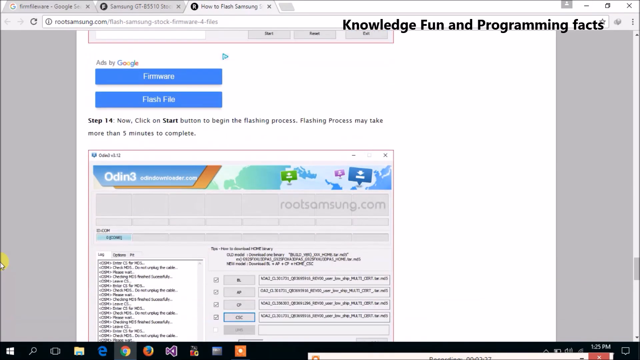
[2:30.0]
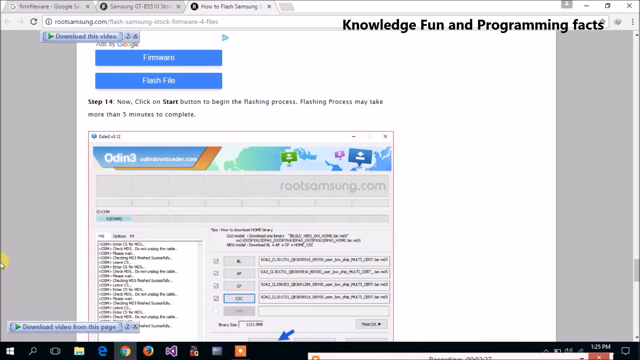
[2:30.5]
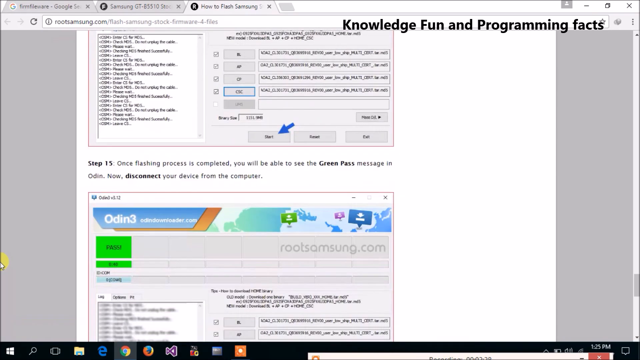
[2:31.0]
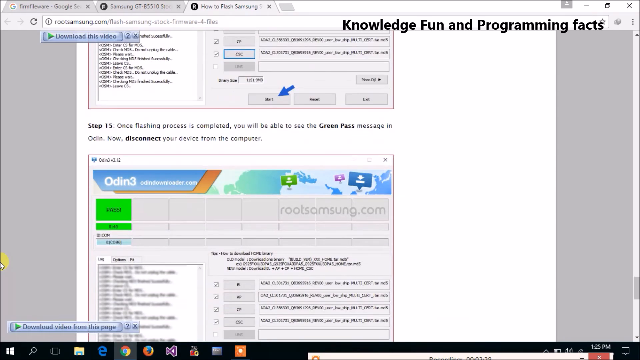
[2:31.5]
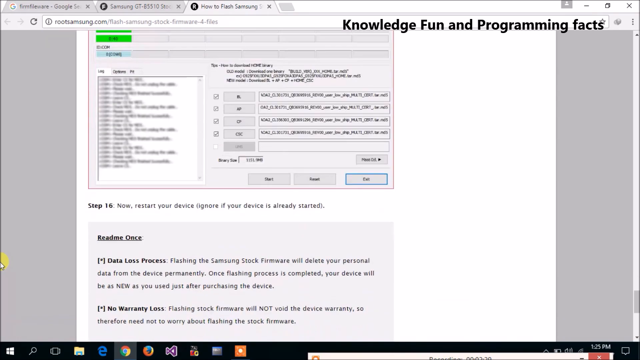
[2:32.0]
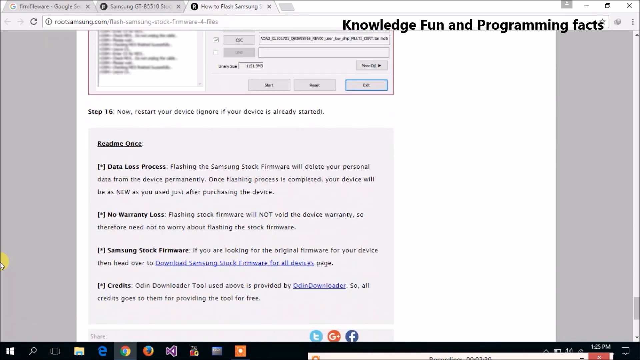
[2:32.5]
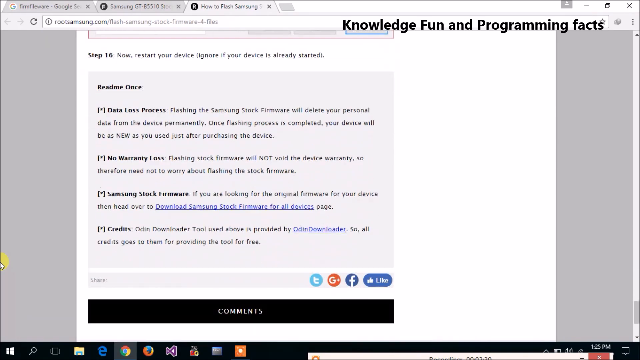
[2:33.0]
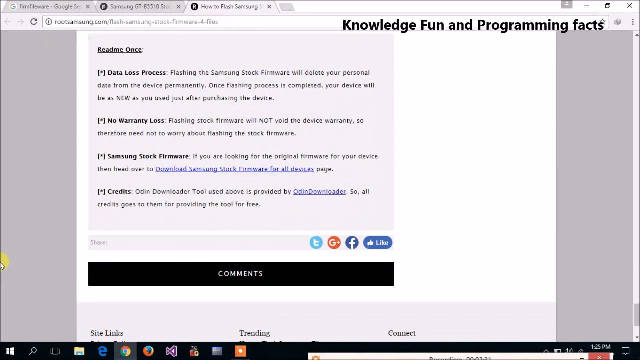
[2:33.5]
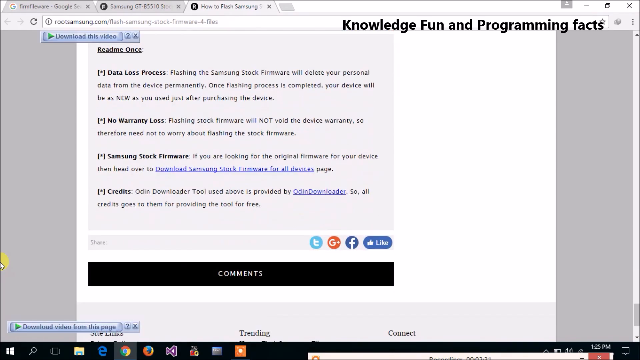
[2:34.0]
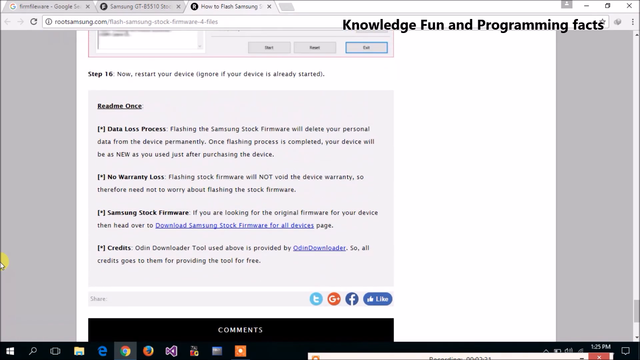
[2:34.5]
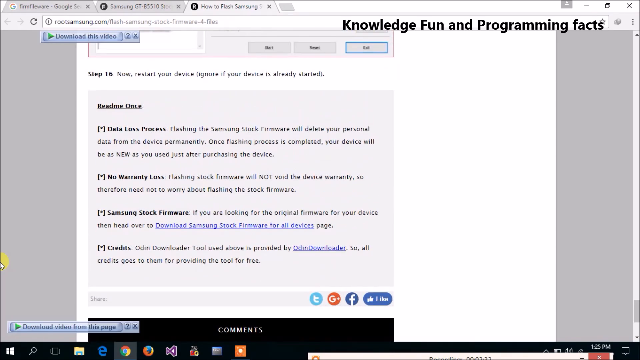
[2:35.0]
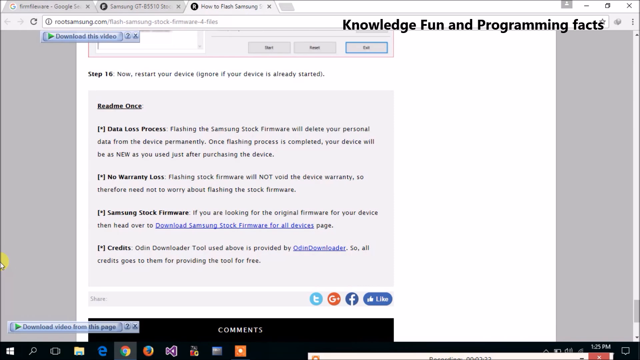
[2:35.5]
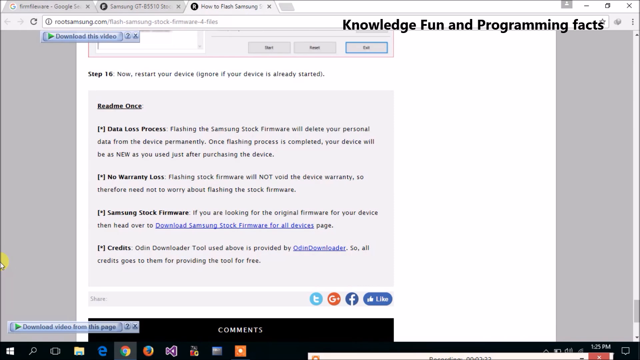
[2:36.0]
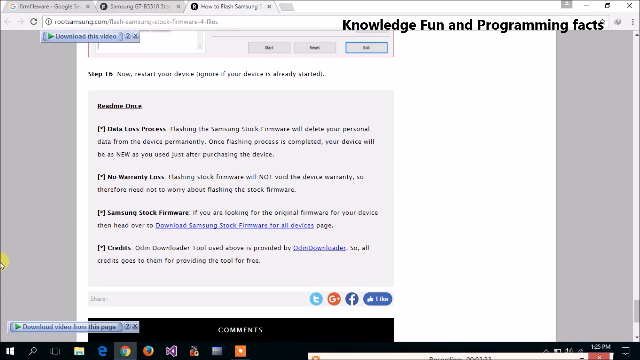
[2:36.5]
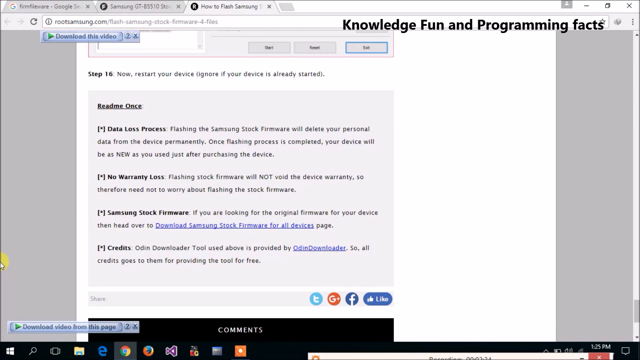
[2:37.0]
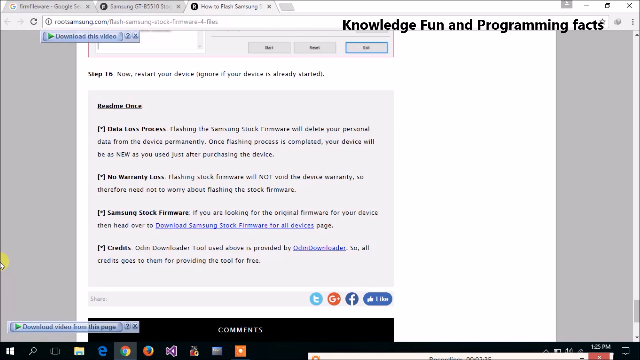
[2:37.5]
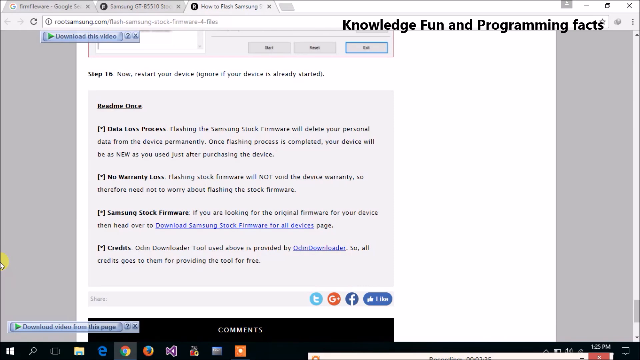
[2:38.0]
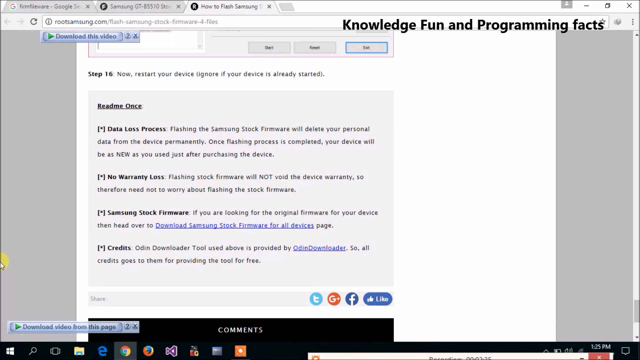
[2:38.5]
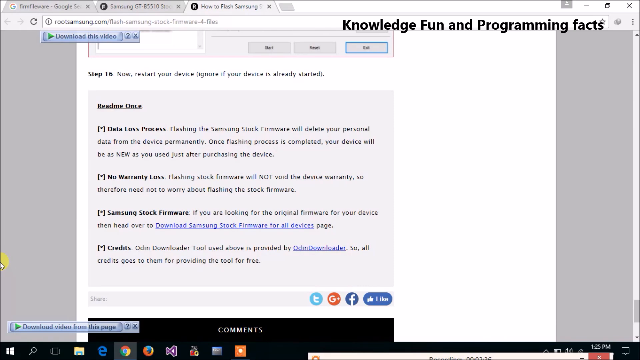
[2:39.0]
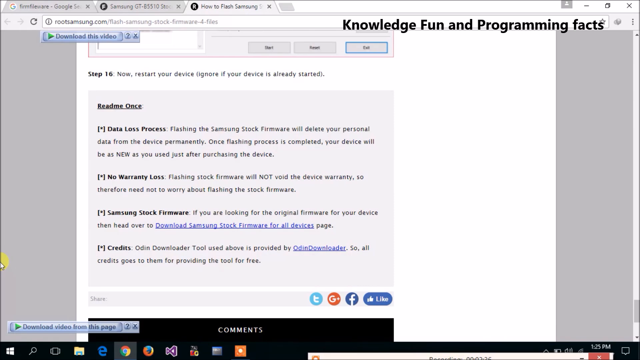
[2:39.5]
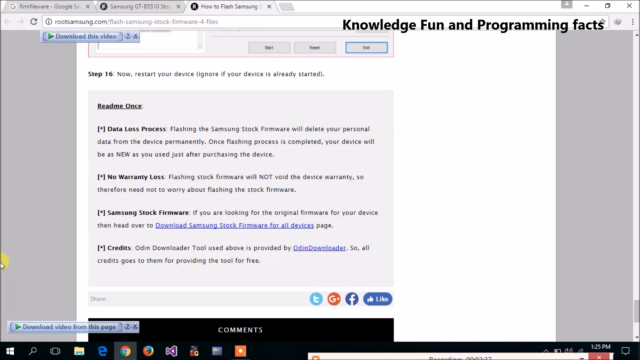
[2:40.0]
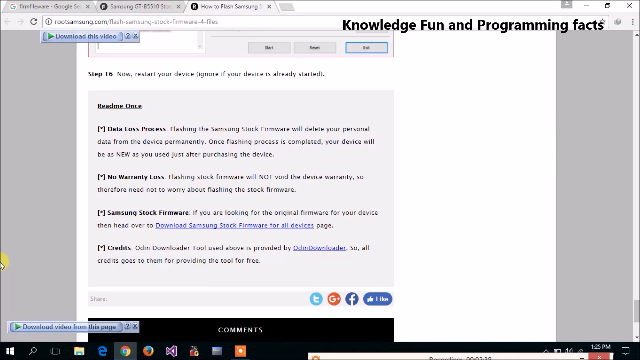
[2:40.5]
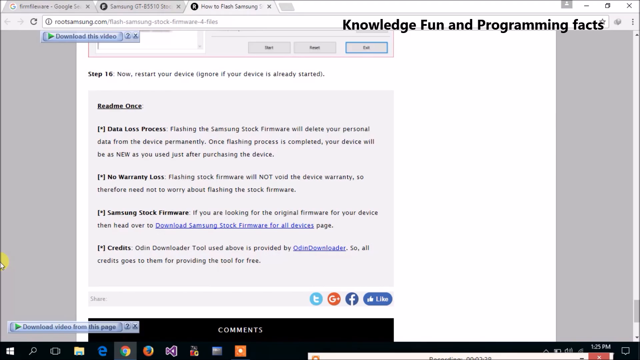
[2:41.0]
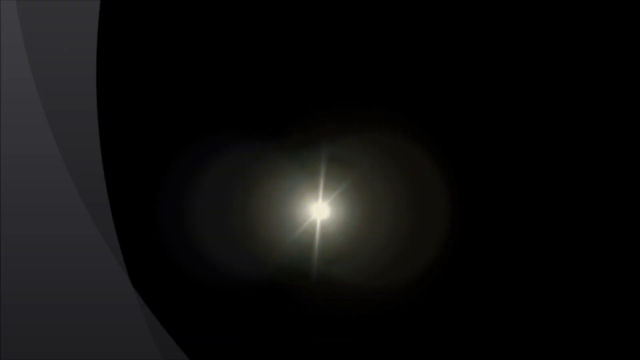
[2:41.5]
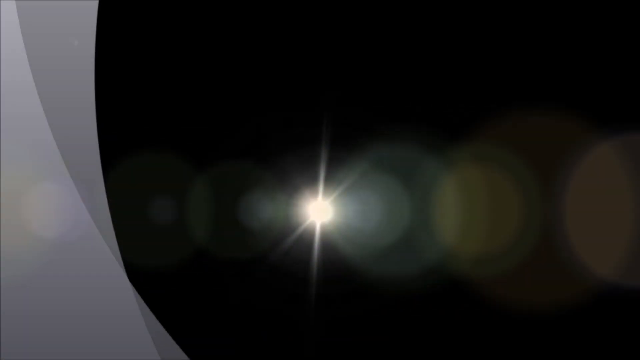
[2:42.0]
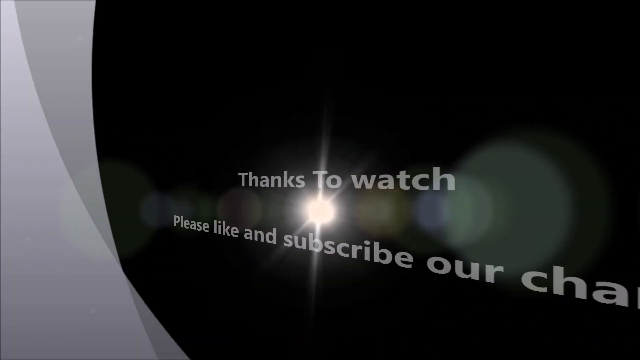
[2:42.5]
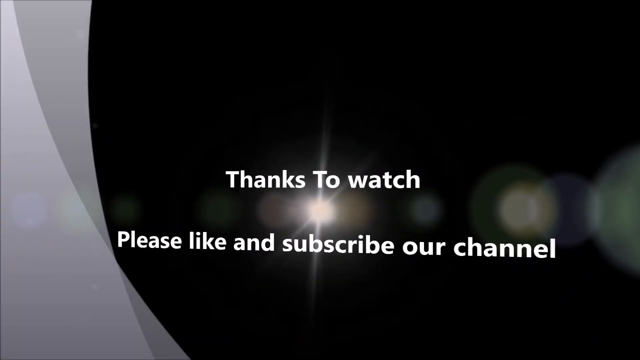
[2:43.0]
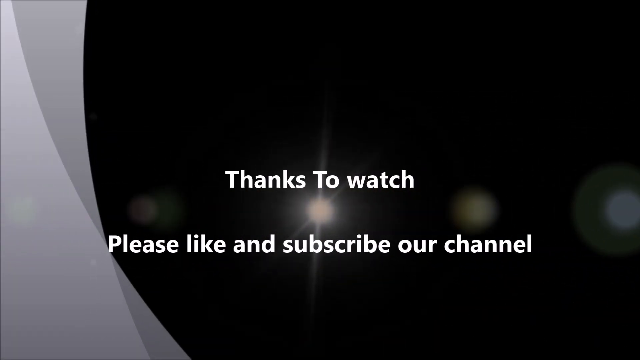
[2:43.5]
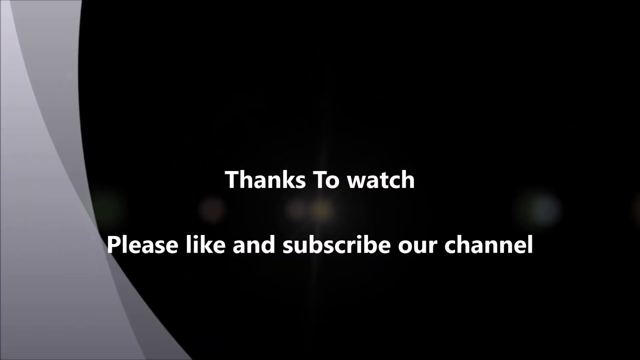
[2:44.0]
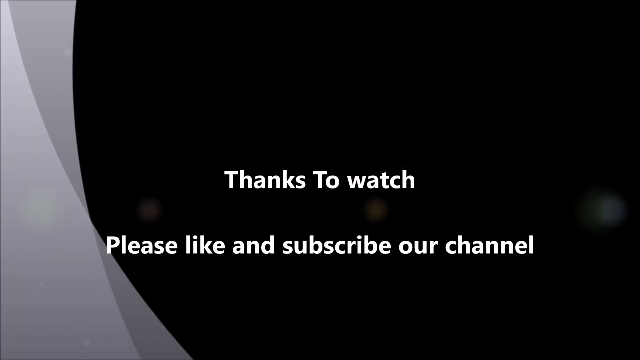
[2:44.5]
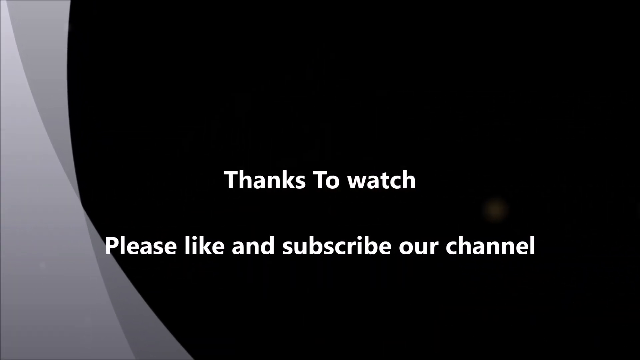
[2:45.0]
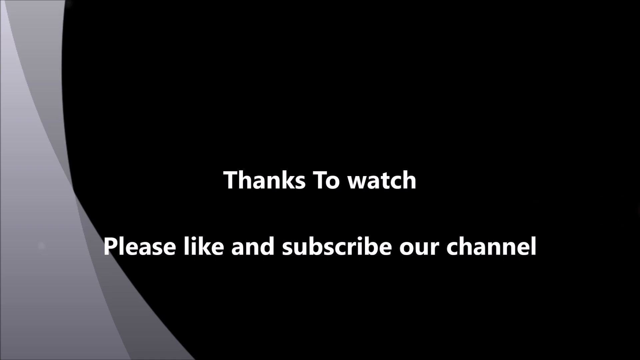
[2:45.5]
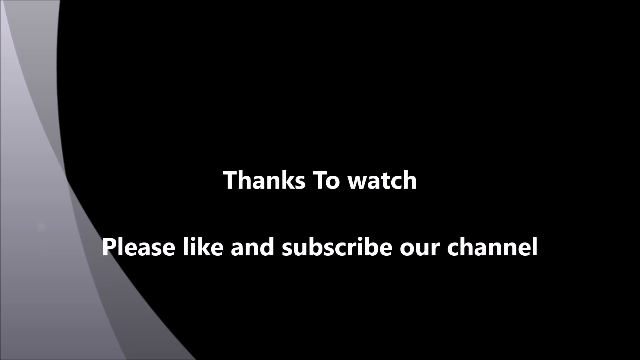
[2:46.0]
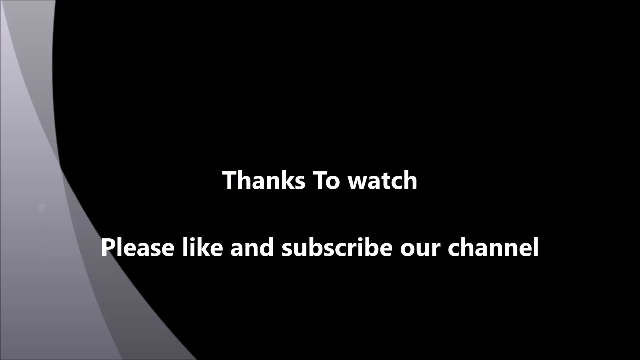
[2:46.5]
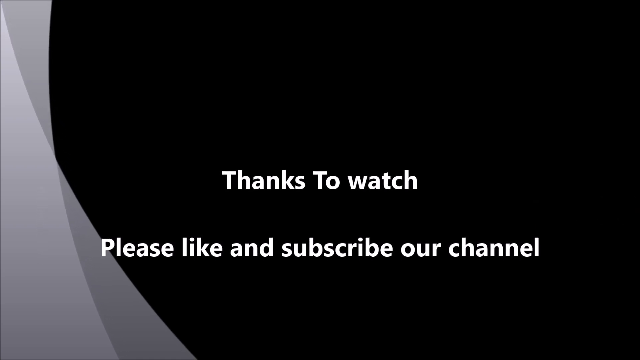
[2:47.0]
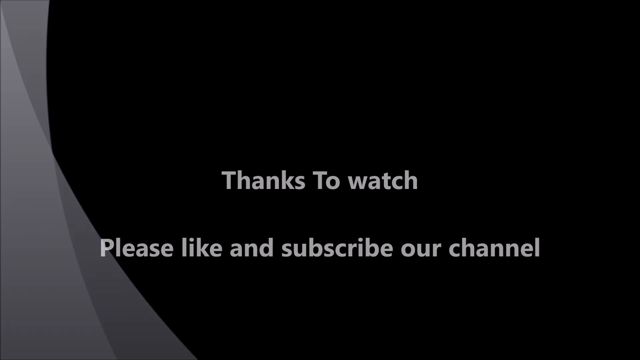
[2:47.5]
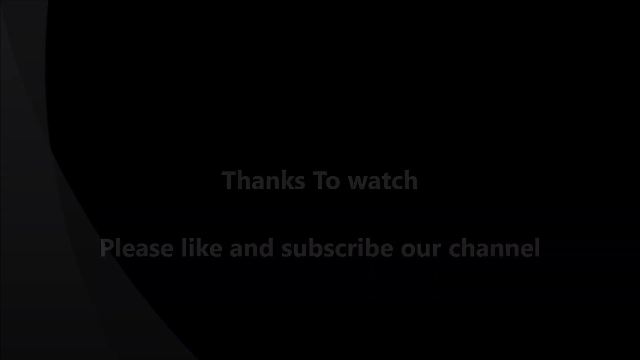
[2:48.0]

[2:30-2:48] A page shows some Google Ads, with the text Odin3 in the main part of the page. The user scrolls down, revealing text including the subtitle "Read Me Once" and other subheadings such as "Data Loss Process," "No Warranty Loss," "Samsung Stock Firmware" and "Credits." The video then cuts to a closing page with the text "Thanks To watch. Please like and subscribe our channel." Light effects shine behind the text against a mainly black background, and there are some grey arcs on the left side of the screen as the light effects disappear from the center toward the sides. The video seems to be about how to download some Samsung-related firmware, and the channel could possibly be a tutorial YouTube channel. While the page is scrolled up and down, the text "Knowledge Fun and Programming Facts" remains visible throughout the video.